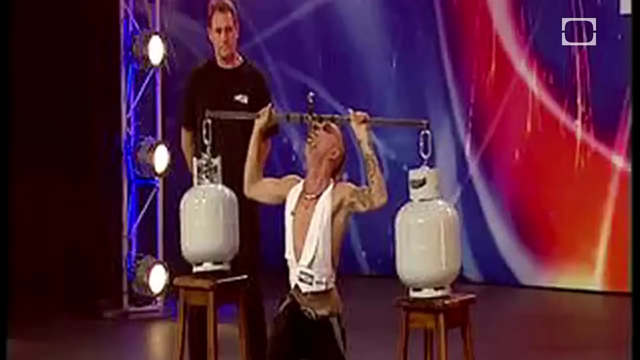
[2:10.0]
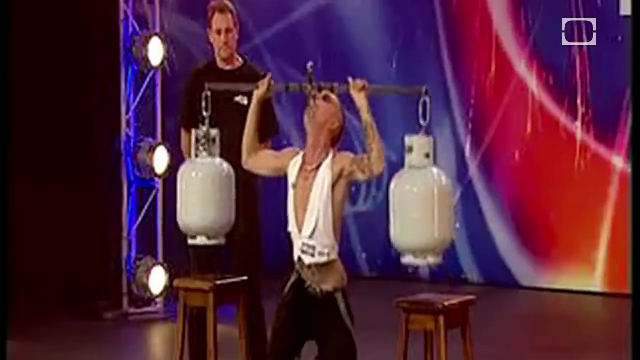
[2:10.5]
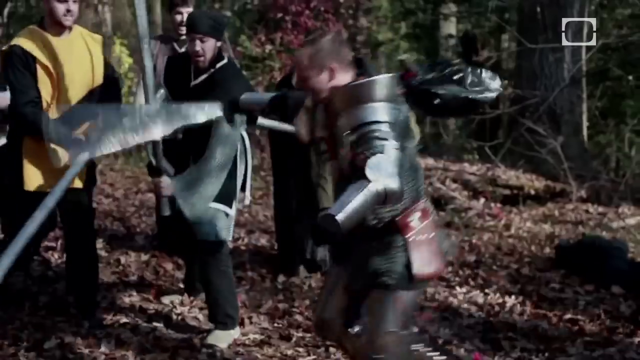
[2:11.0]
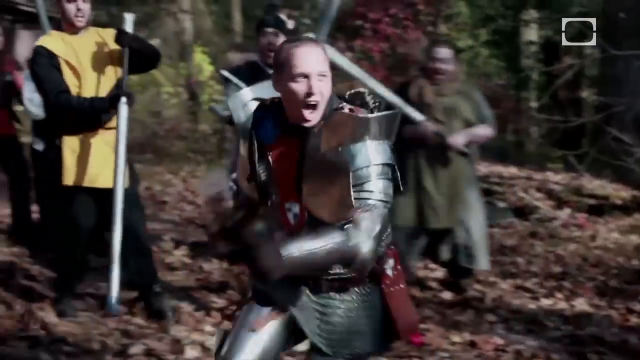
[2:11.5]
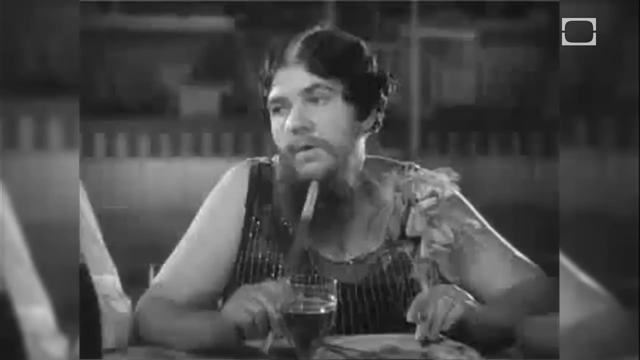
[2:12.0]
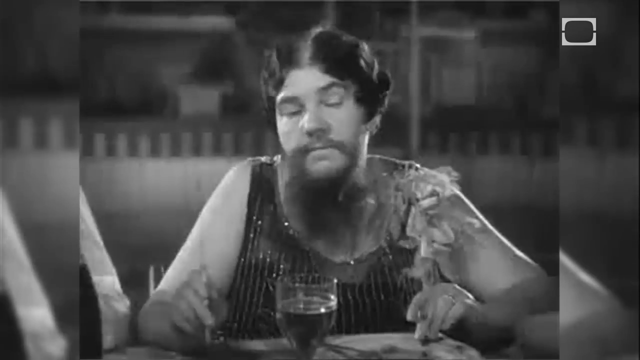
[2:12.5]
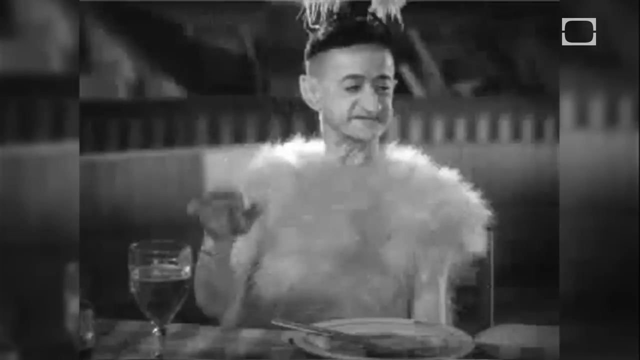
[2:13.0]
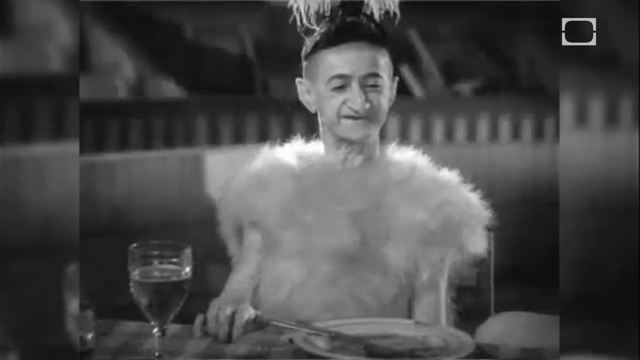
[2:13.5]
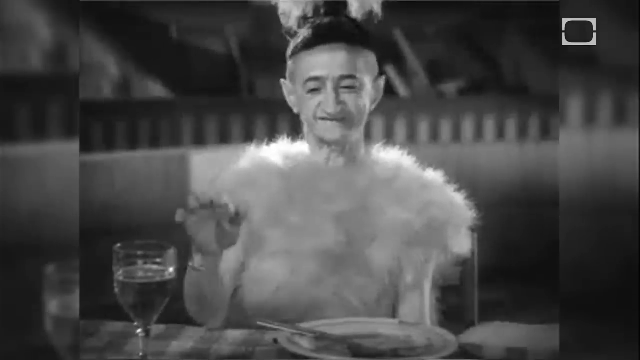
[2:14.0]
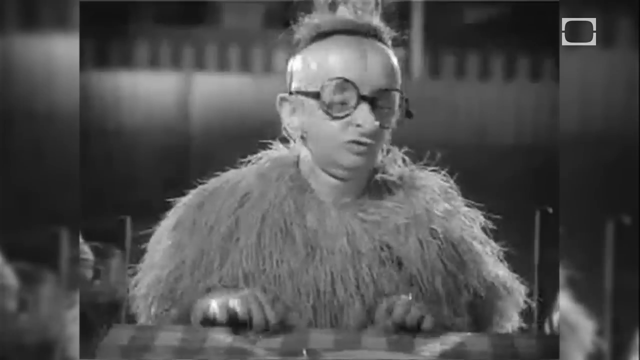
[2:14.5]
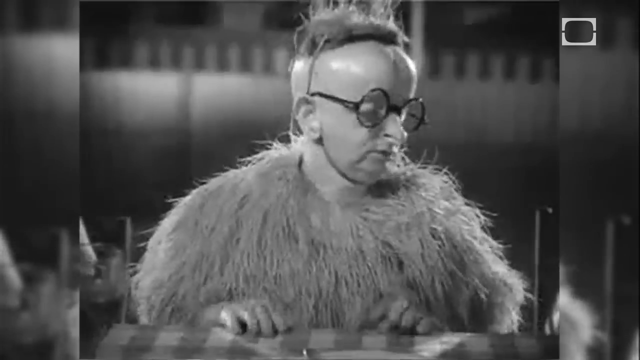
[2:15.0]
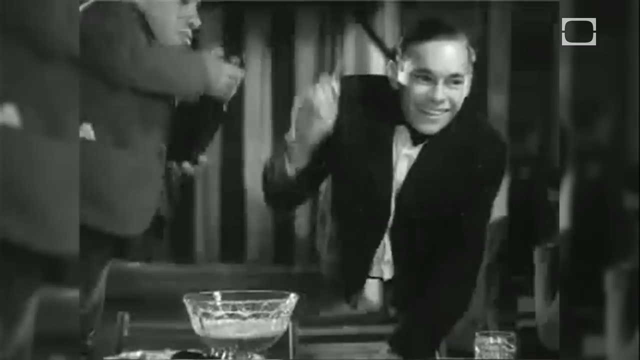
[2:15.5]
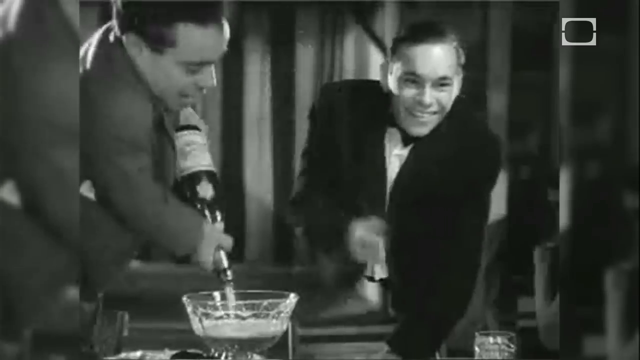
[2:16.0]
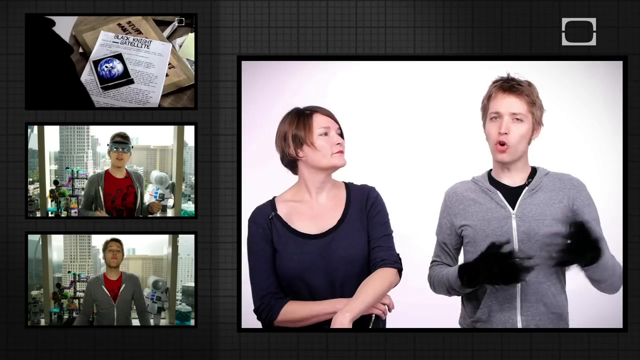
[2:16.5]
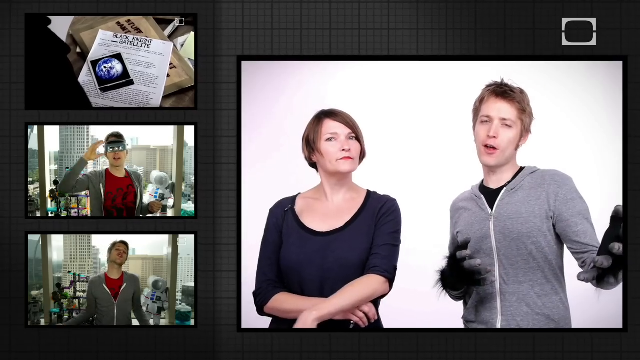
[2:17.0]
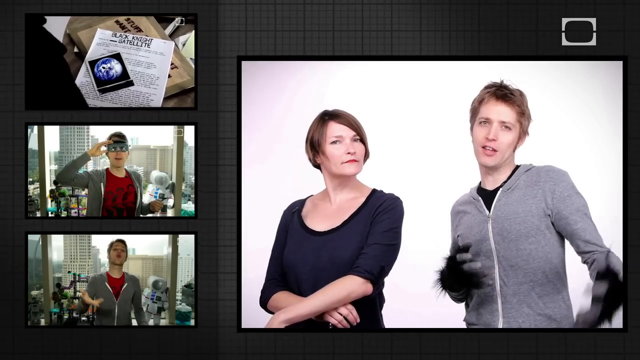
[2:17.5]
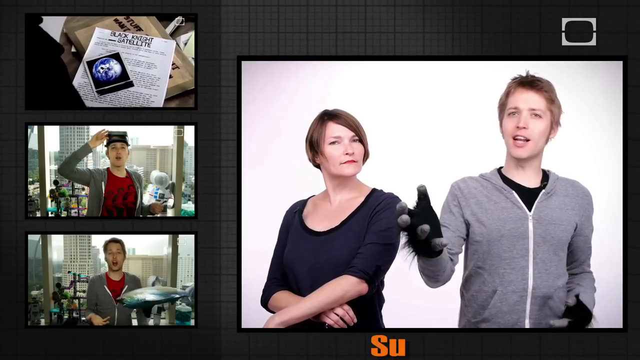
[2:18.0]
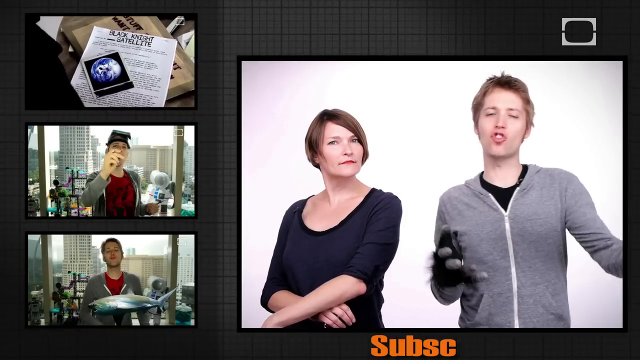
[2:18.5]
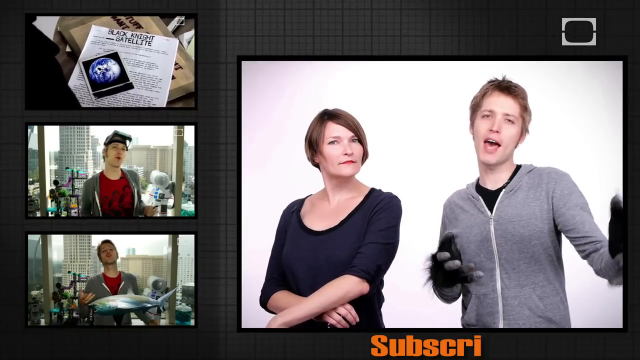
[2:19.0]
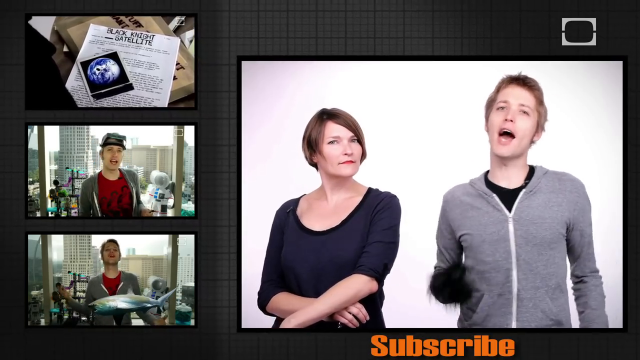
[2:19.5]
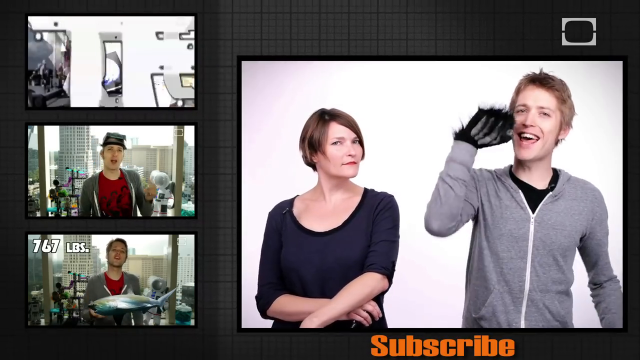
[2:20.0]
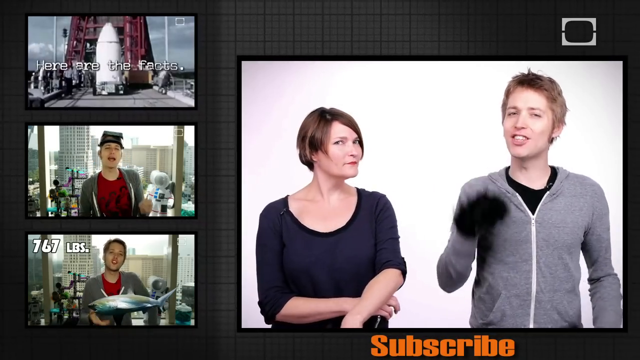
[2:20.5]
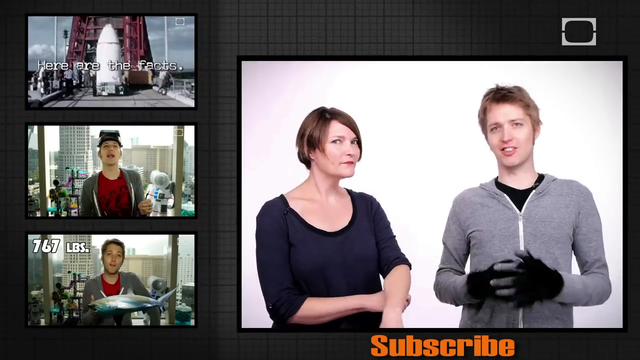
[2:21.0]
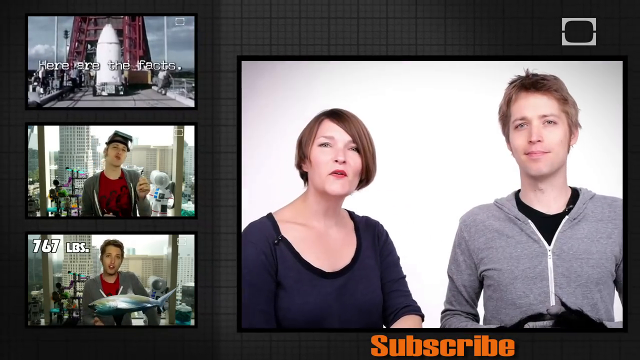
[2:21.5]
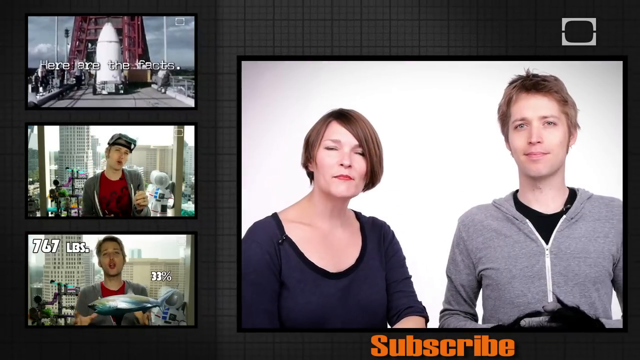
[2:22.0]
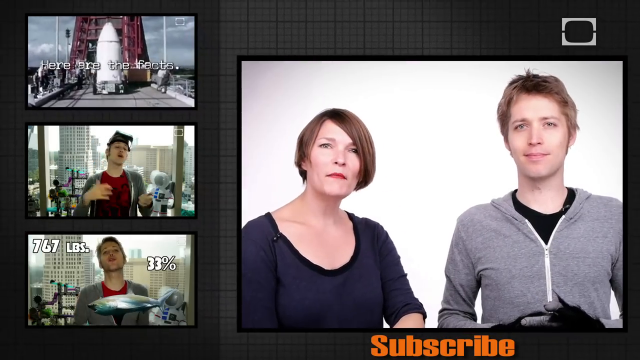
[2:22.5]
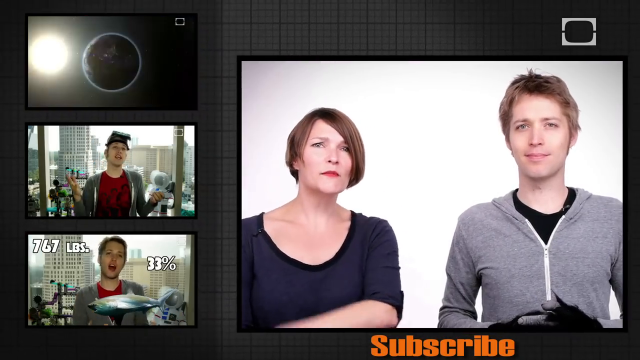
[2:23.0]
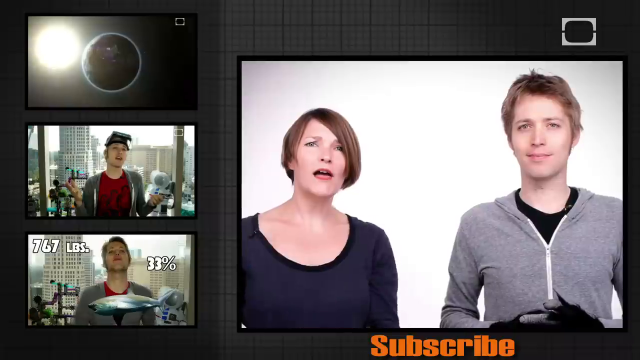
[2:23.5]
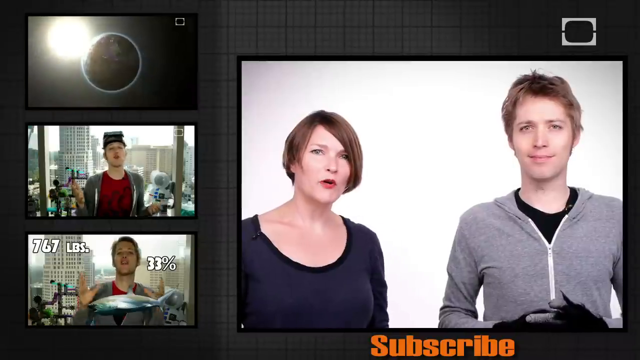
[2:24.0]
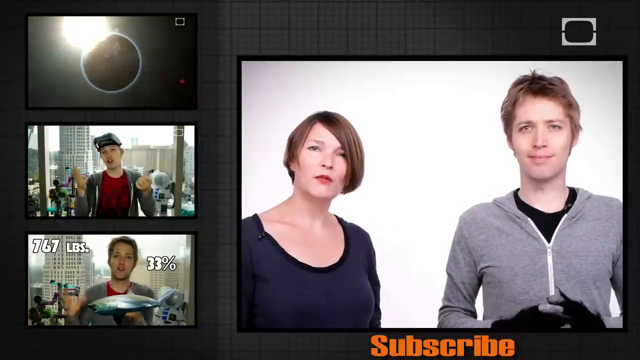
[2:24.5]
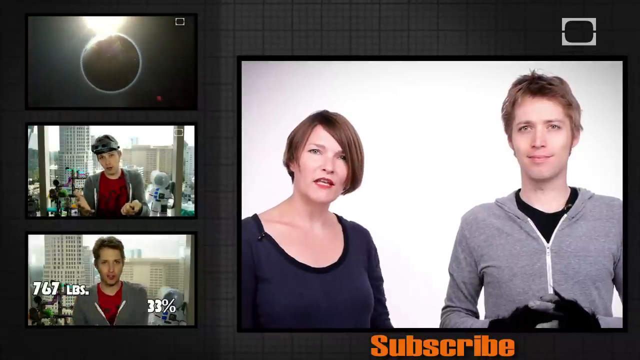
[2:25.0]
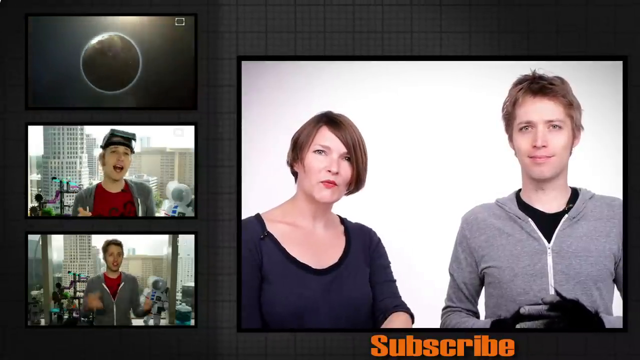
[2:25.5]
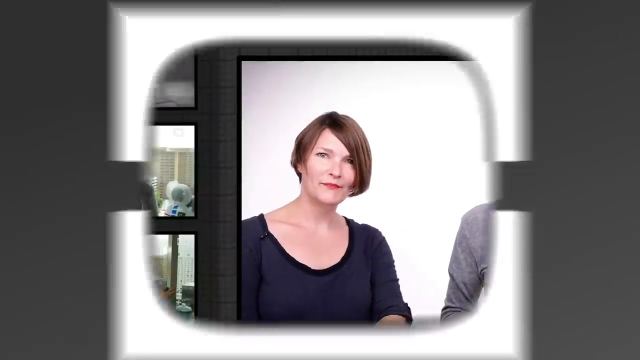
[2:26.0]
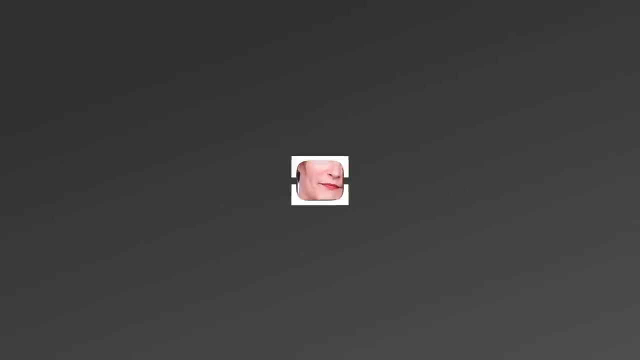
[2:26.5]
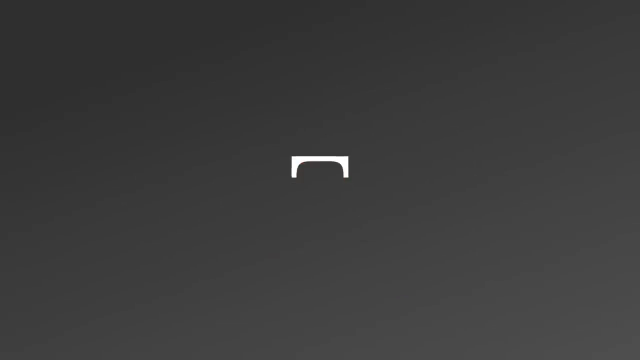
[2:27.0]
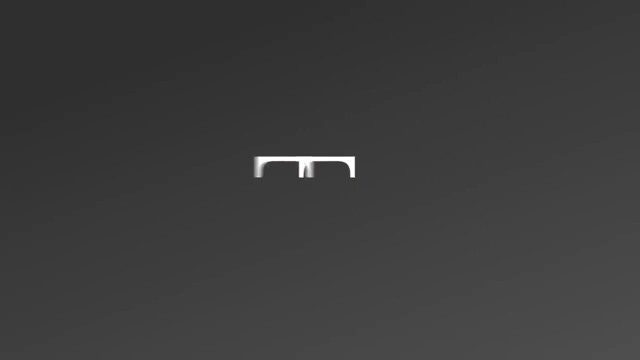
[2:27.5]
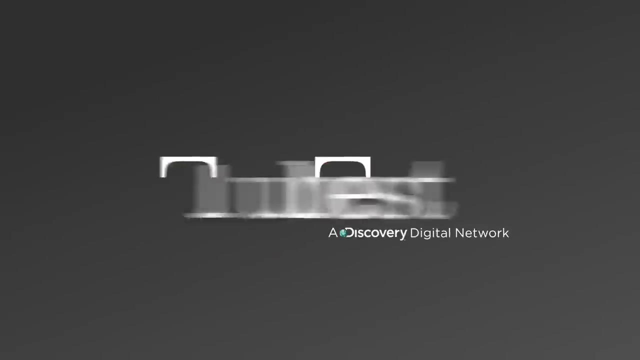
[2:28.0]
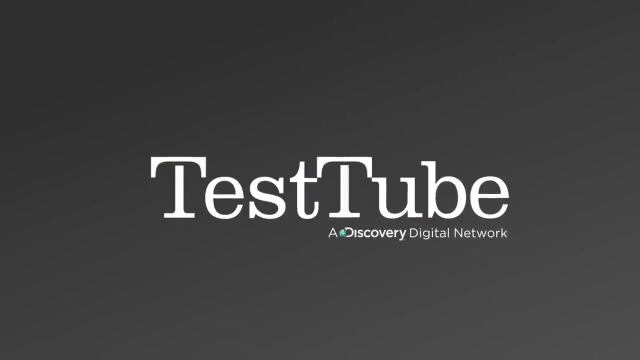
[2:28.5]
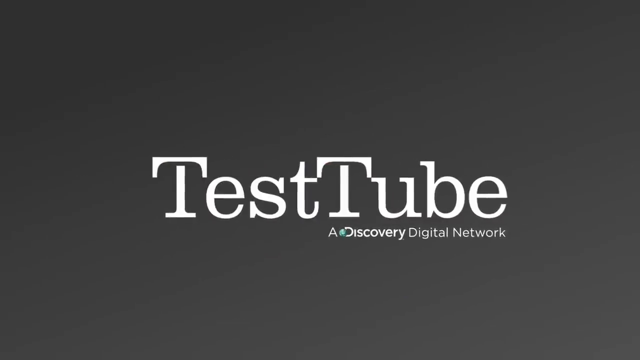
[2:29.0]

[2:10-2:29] Odd acts from a carnival or circus continue. A man uses his teeth to carry a wooden staff with a tank on each end as weight; the tanks look like propelled gas tanks. A montage of black-and-white videos of odd carnival acts follows. The video appears to be from a channel, hosted by a man and a woman, that shares rare, odd circus and carnival acts, mixing old black-and-white footage of different sword swallowers and other carnival acts with present-day ones.